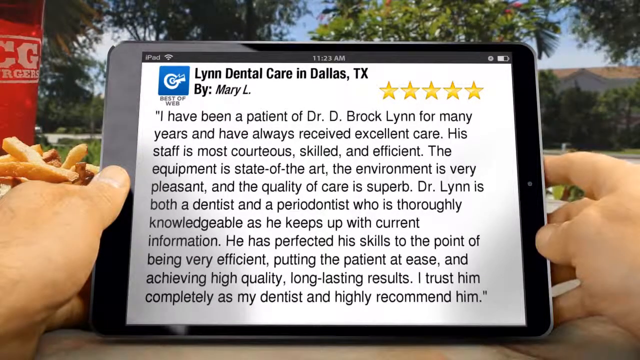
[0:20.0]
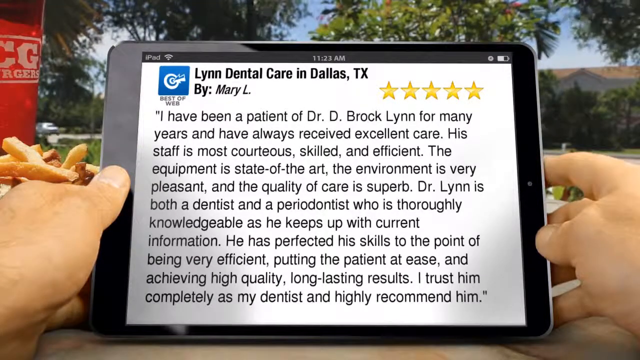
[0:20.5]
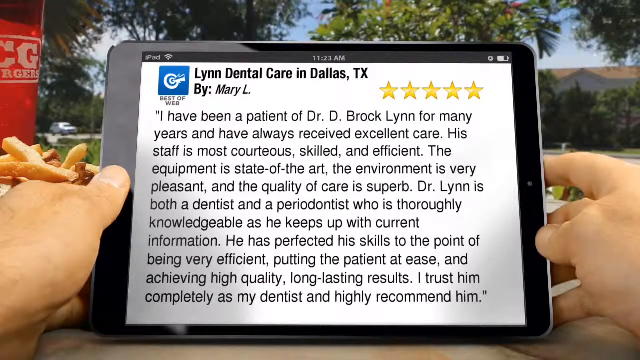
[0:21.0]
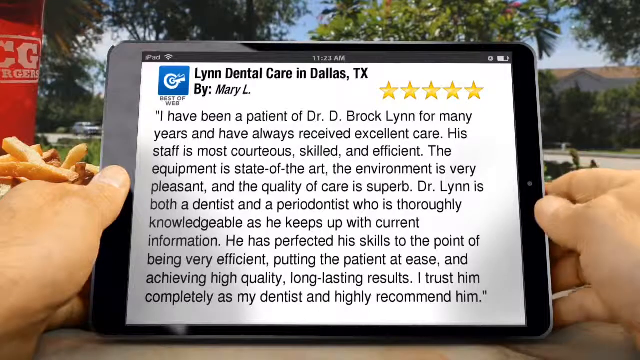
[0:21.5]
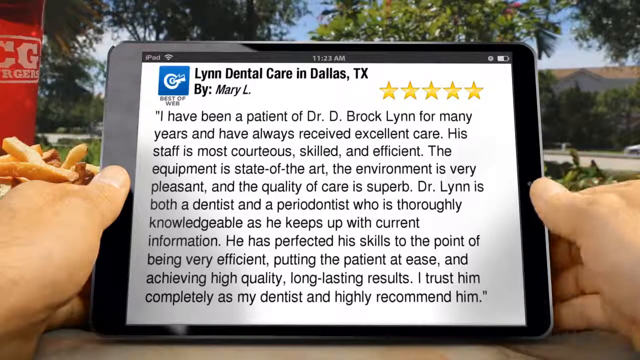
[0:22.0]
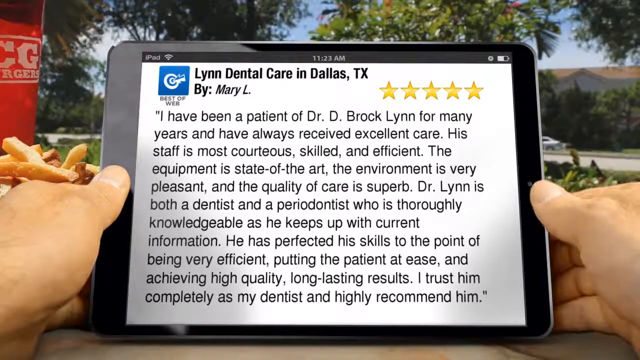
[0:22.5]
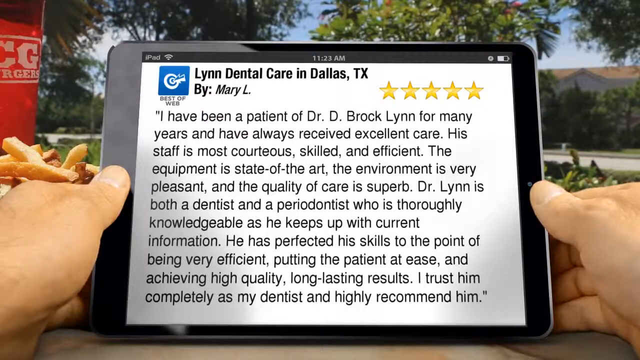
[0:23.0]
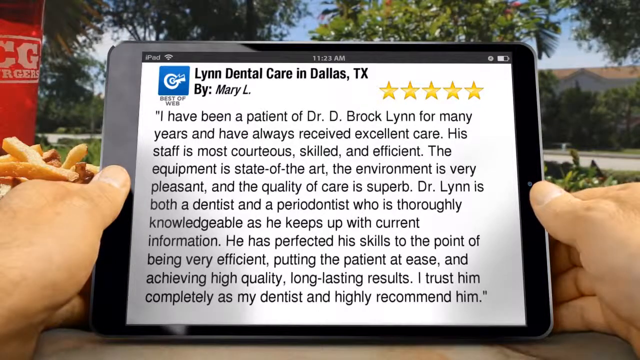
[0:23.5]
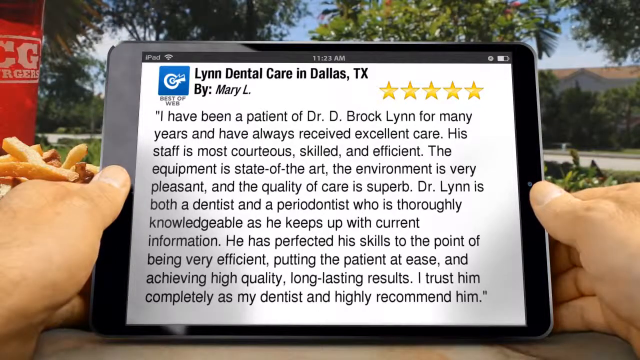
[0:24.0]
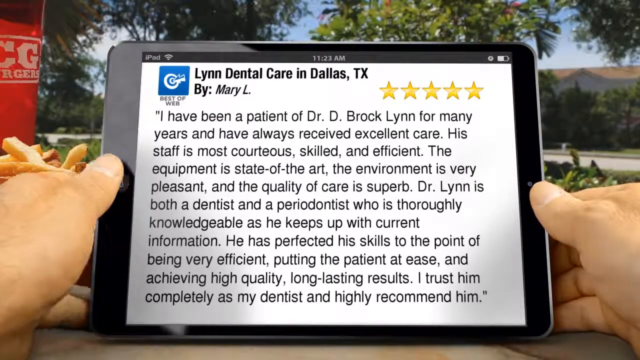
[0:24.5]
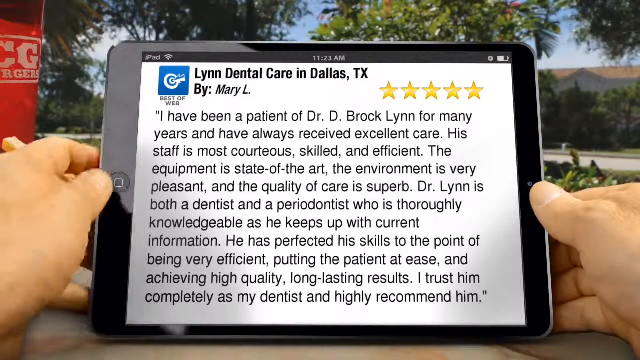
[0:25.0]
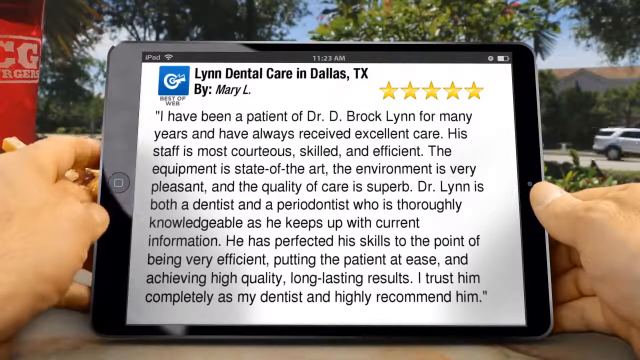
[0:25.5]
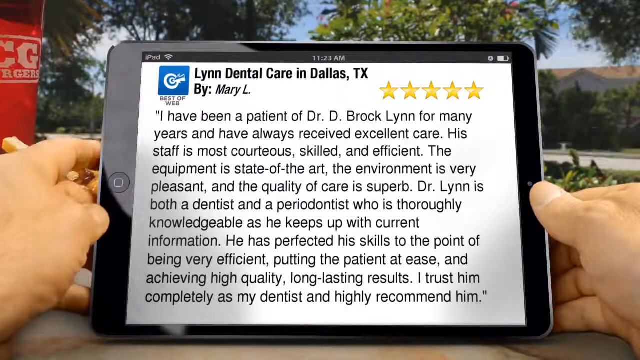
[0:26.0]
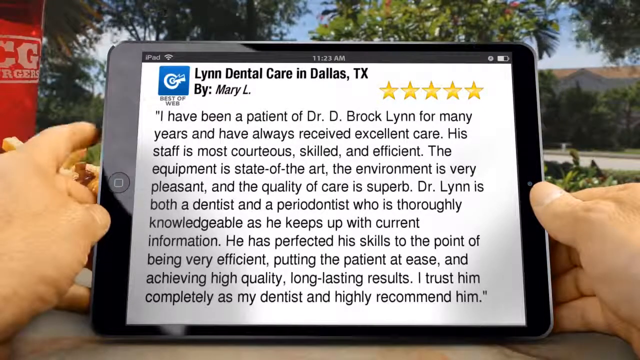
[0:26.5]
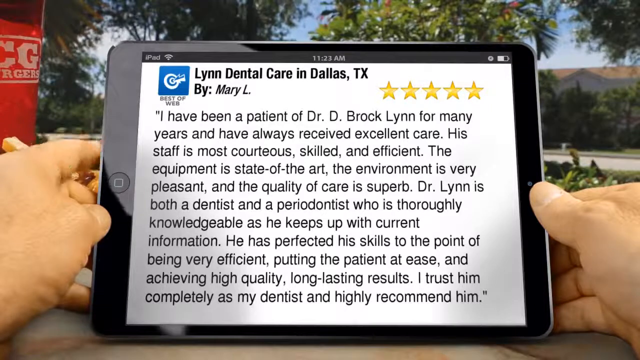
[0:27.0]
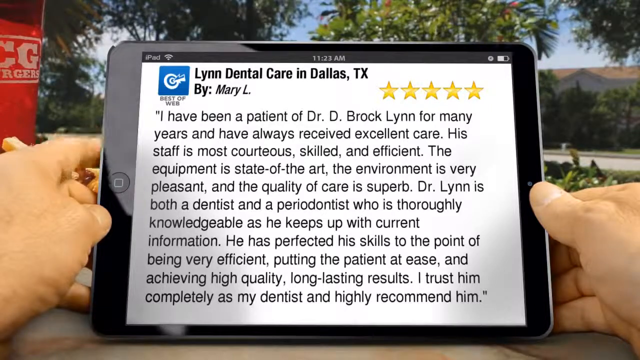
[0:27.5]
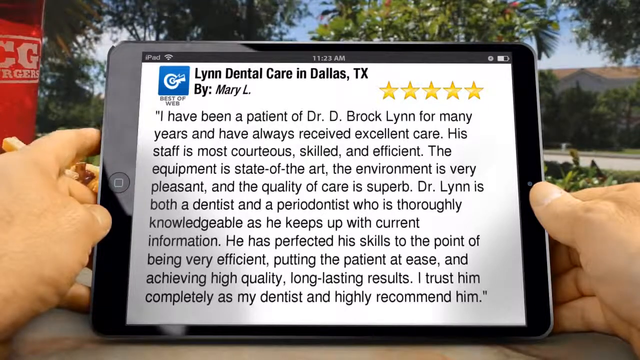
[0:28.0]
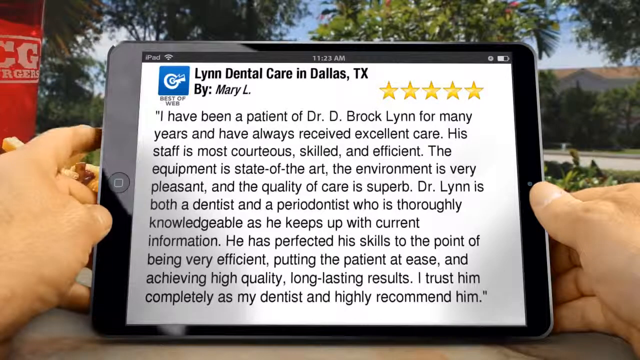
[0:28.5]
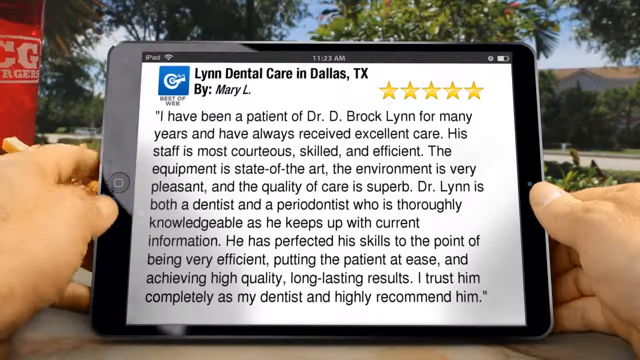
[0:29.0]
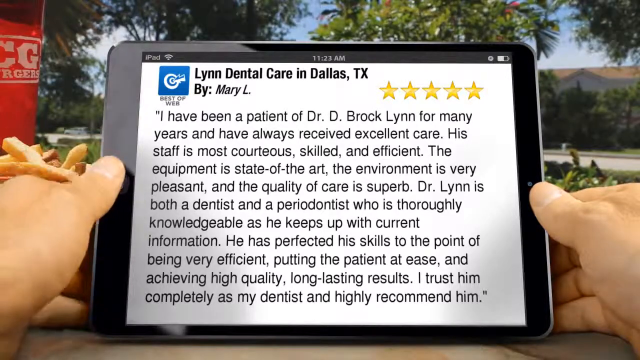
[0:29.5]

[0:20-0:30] A man holds an iPad showing a review of Lynn Dental Care in Dallas, Texas, written by Mary L. Behind it is a background of a neighborhood with cars driving by. The man taps the iPad with his fingers. The review praises the state-of-the-art equipment and the pleasant environment, and highly recommends the dentist. There are fries in the background and what looks like the name of a burger company cut off in the corner.